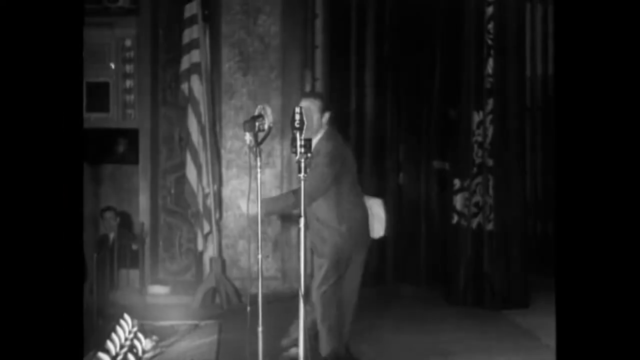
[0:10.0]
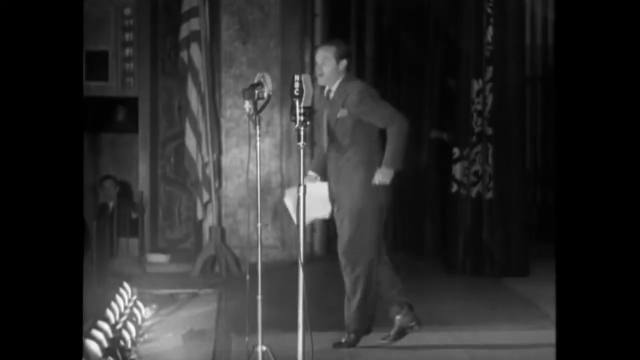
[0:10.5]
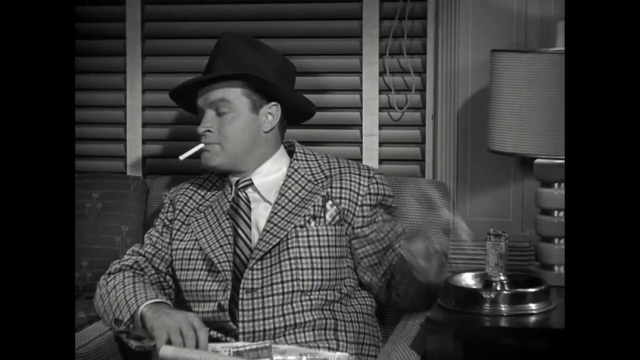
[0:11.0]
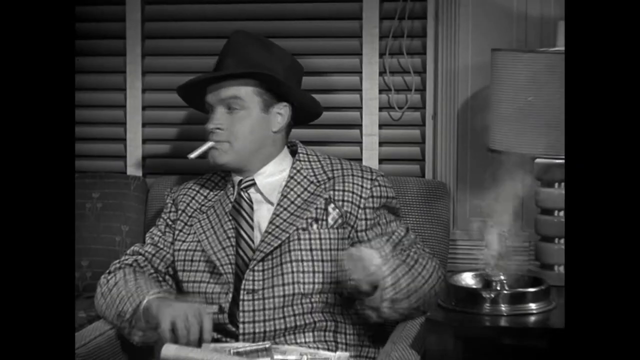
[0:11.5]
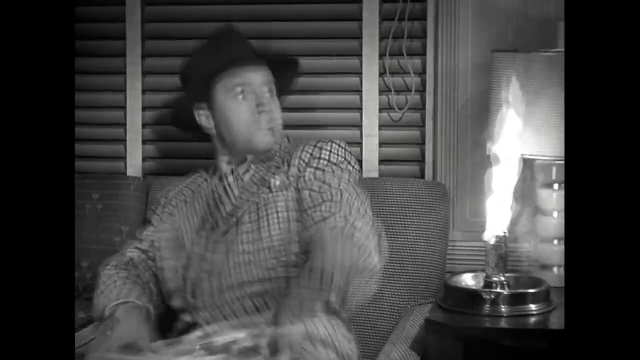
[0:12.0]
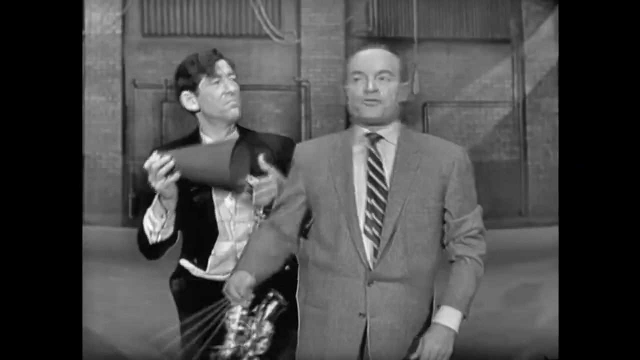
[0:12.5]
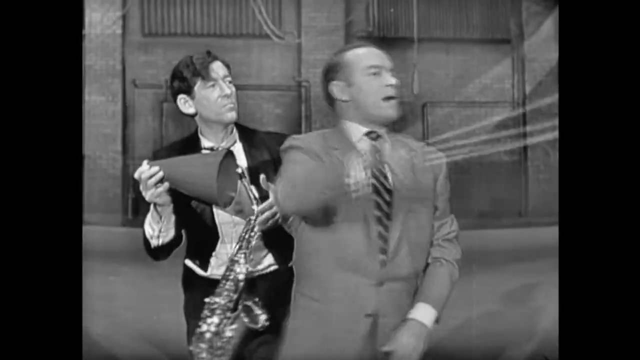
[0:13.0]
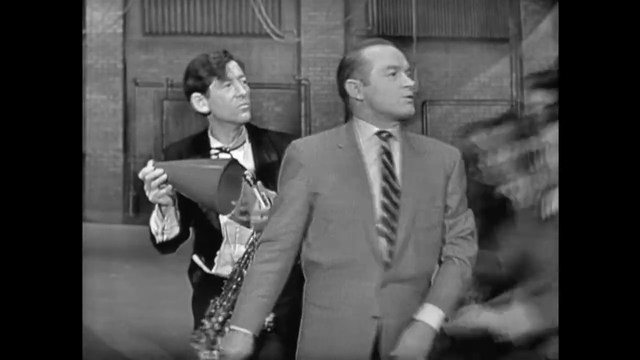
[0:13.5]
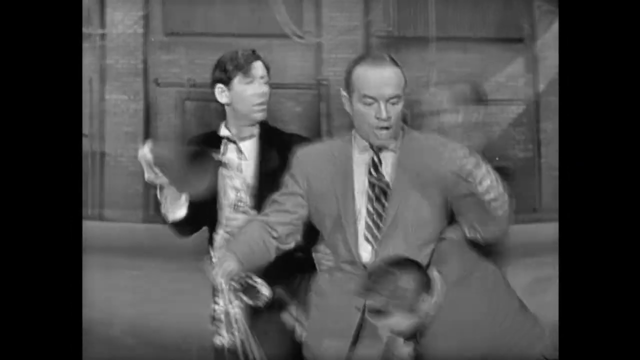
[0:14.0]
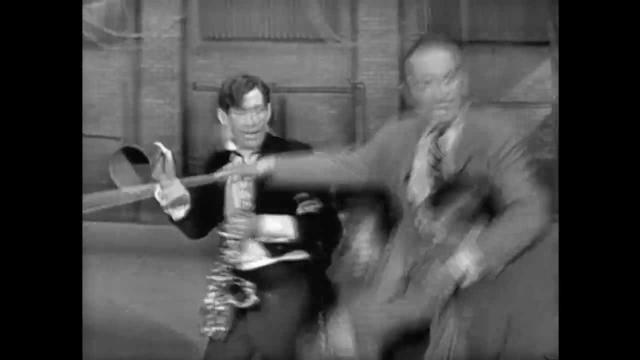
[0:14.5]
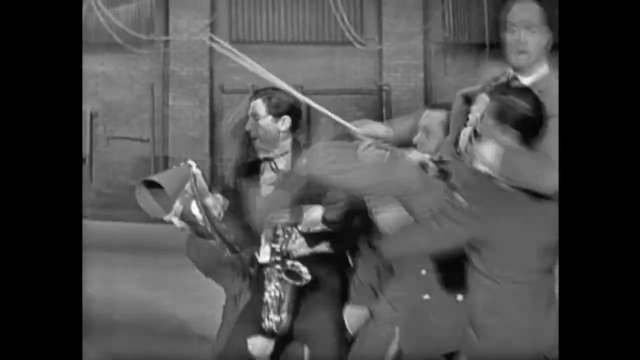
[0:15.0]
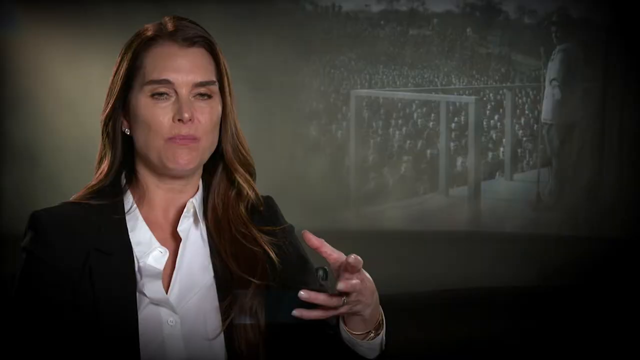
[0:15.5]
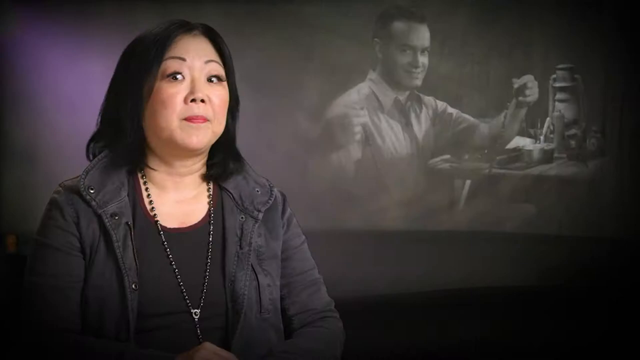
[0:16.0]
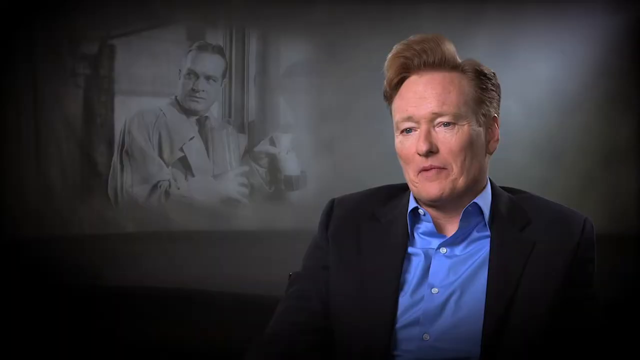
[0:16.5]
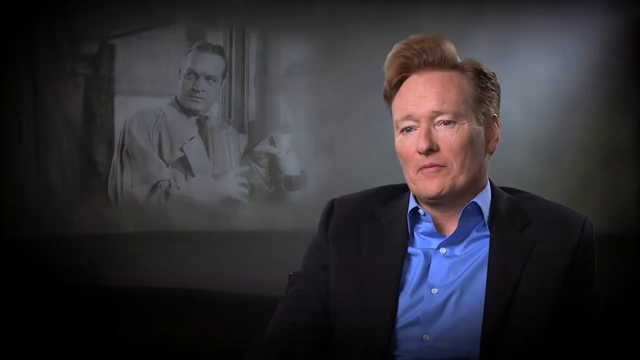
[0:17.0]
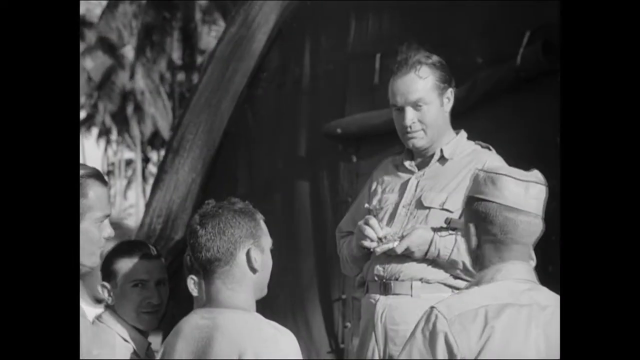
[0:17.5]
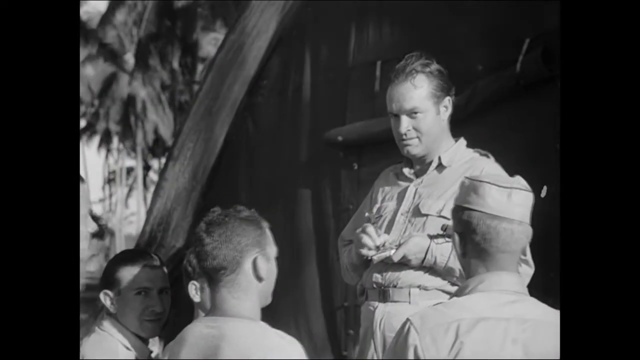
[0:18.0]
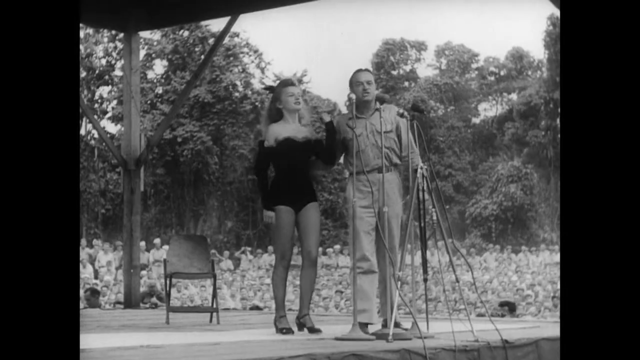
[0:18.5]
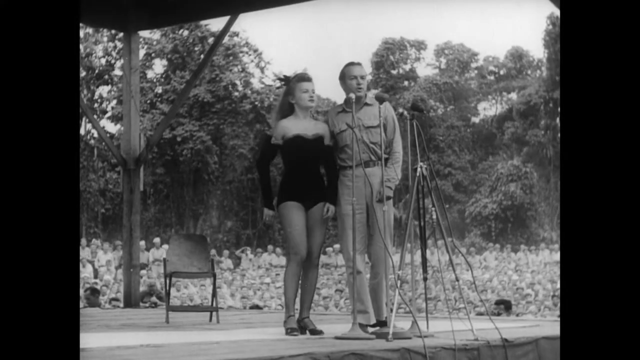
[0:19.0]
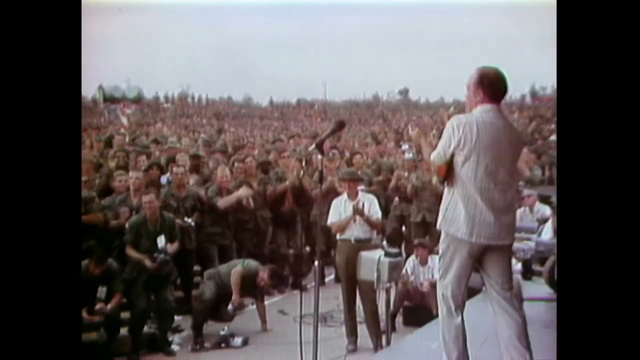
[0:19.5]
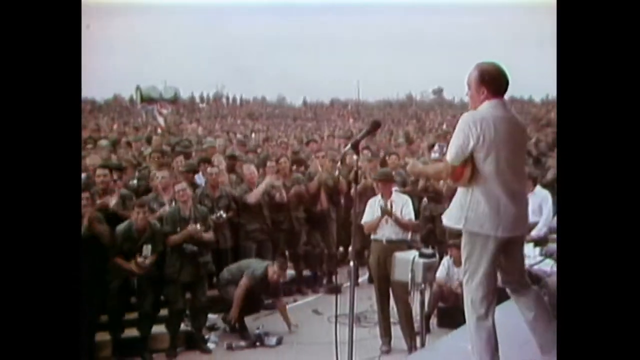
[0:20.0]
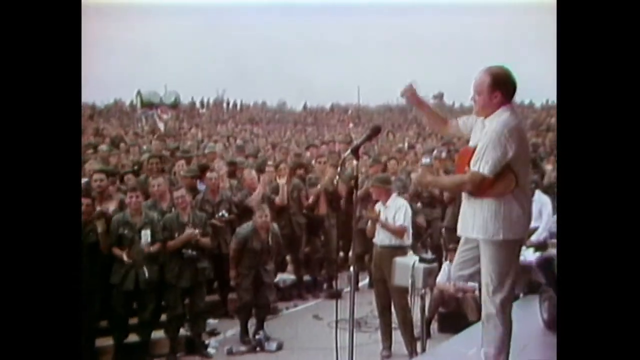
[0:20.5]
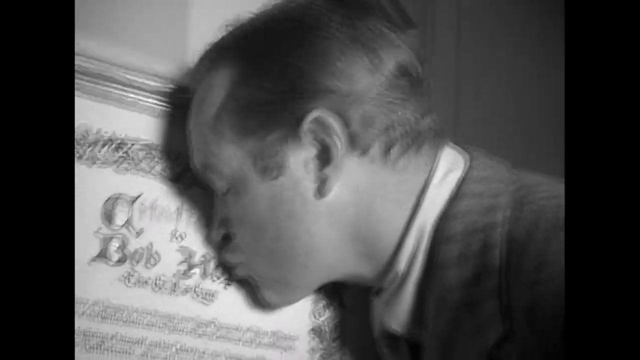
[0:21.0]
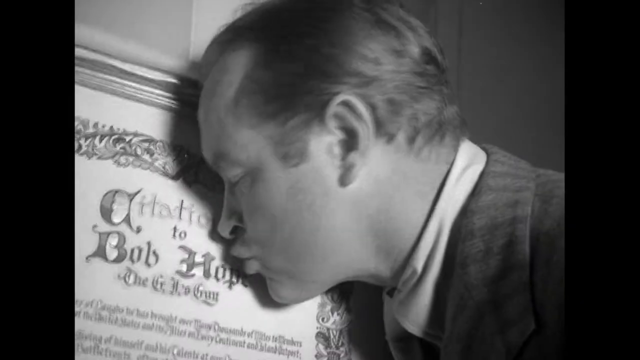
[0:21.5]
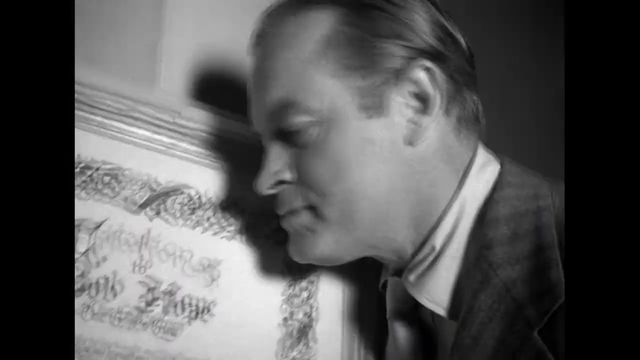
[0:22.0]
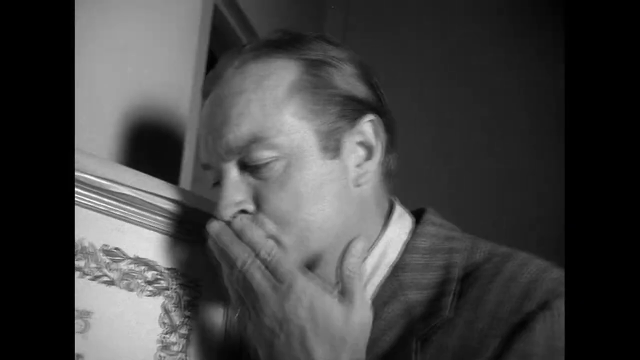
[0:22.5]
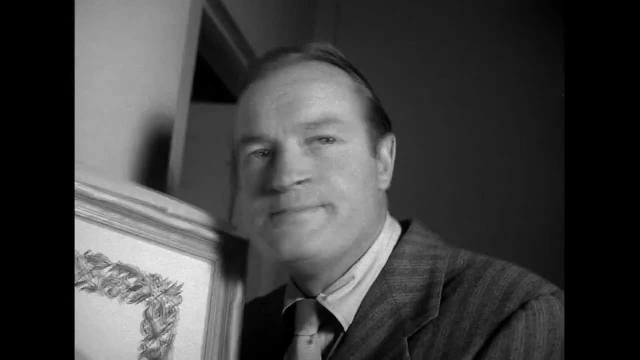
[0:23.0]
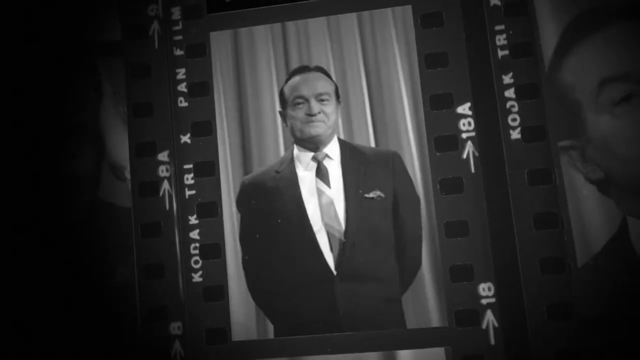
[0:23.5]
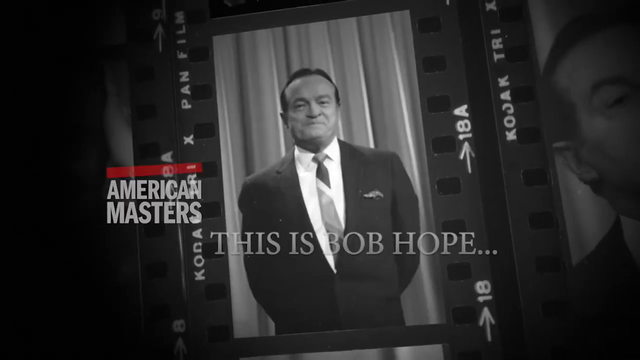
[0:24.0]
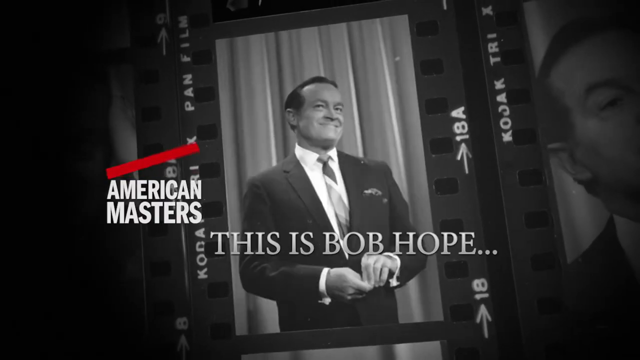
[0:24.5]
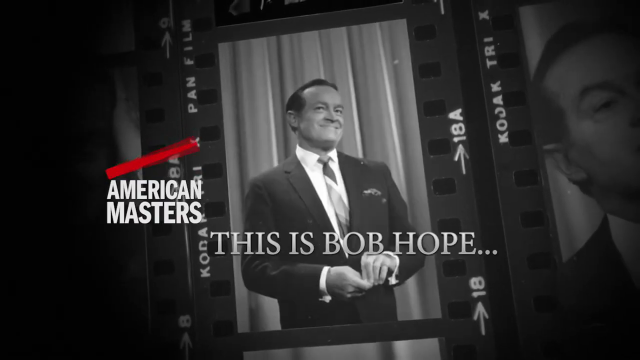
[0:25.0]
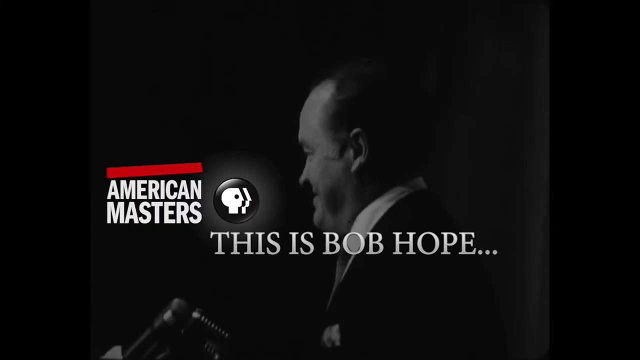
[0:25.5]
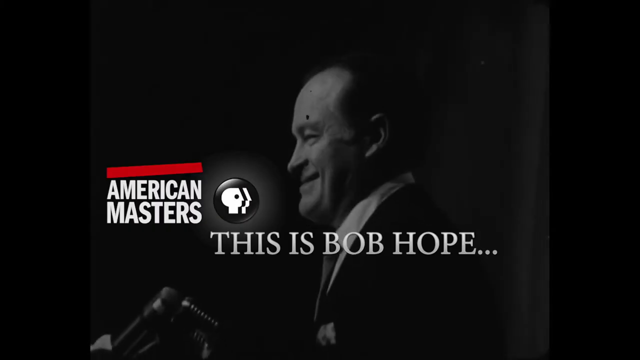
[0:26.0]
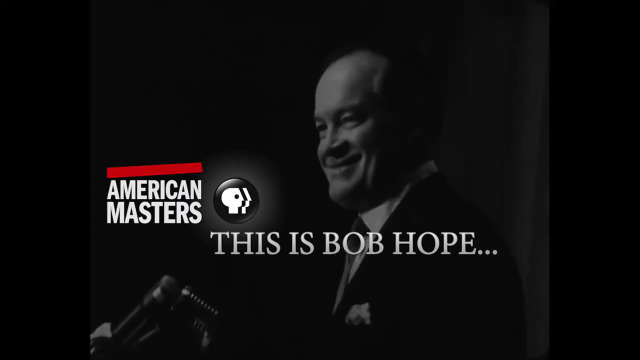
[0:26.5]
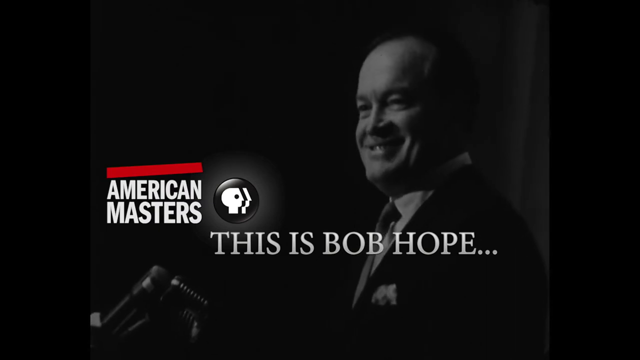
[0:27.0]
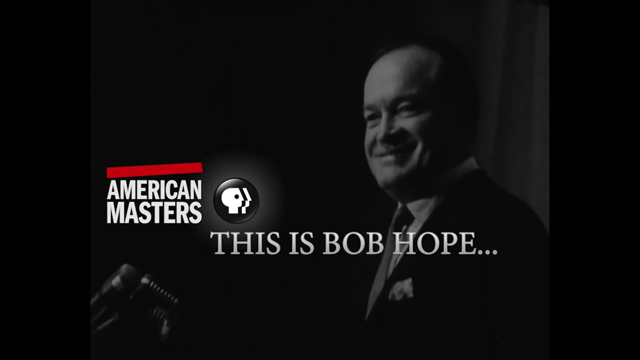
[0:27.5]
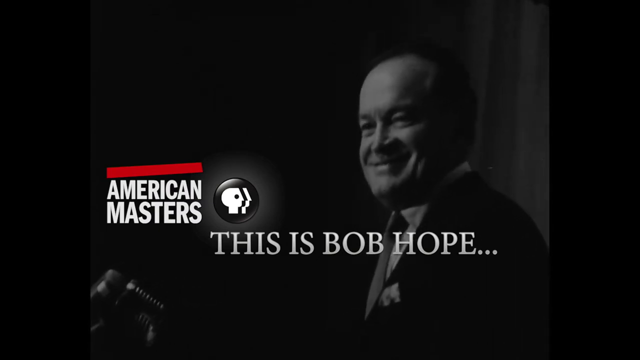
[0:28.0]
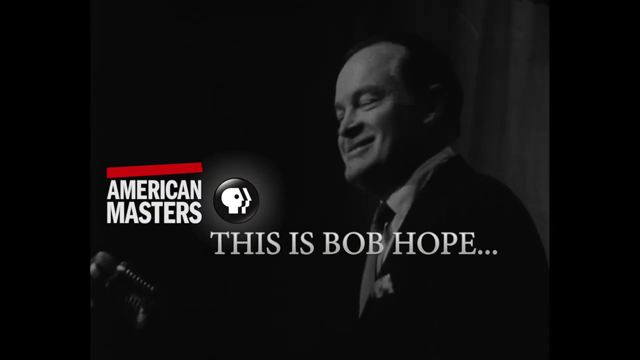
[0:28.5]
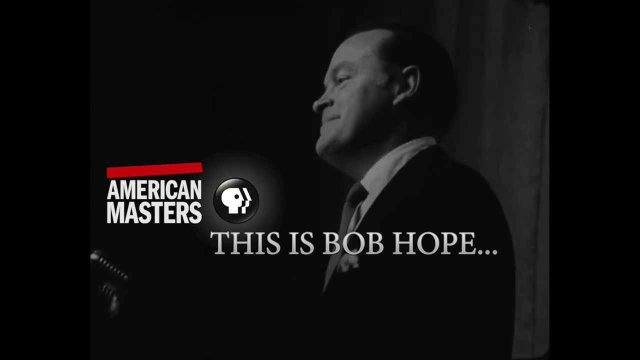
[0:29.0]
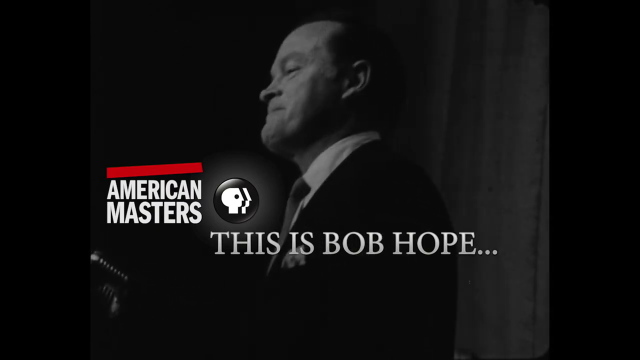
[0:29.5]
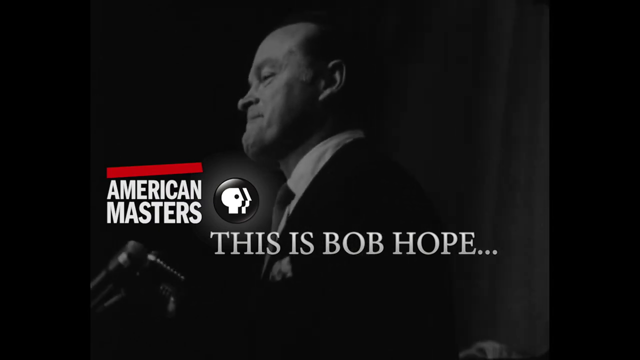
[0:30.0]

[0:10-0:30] Everything is in black and white as a man stands on a stage with two antique microphones in front of him. He dances around quite a bit while holding some white papers in his hand. The scene switches to another man sitting down in a plaid suit, with a black top hat on and a cigarette coming out of his mouth. Some kind of explosion happens on the right side: fire shoots out of a circular device, and the man jumps up and moves to the left. Next, two men stand next to each other, both looking toward the right; one holds up something shaped like a cone, and a group of other people come running down behind them. The footage then switches to color: an old white-skinned man with white and gray hair wears a pink shirt, and behind him is a shadowy figure of a man in a suit and black tie. Several other people are shown only briefly. A woman with brown hair down to her shoulder holds out a hand in front of her. An Asian-looking woman on the left side, with hair just down to her shoulders, talks while holding up her hand. Conan O'Brien appears on the right side in a black suit with a blue shirt underneath, talking quickly. A scene from a movie follows: a man stands on something taller, above a group of people who have their backs to the camera, and he faces down toward the left. Then a man and a woman stand in front of some microphones. A musician is on a stage on the right side, while on the left a crowd of military people cheers him on. A man stands and kisses something on a wall that has writing about Bob Hope on it. Next, a man in a suit stands up straight, looking toward the left. Words appear on the left side: "American Masters" with a red line above it, and underneath, "this is Bob Hope". Finally, Bob Hope is shown from a side angle, smiling.